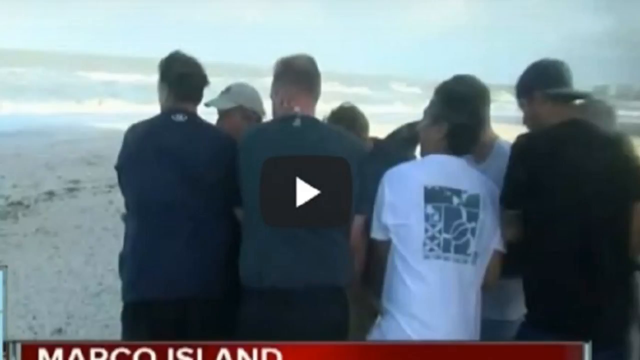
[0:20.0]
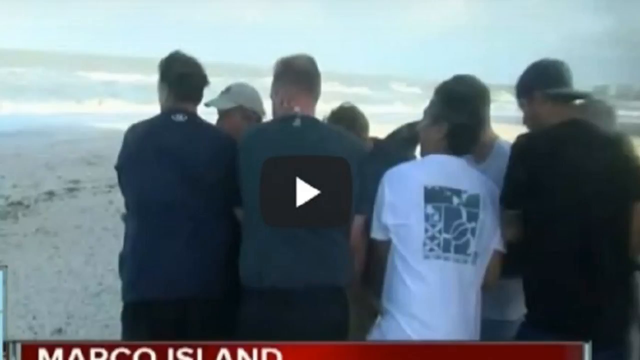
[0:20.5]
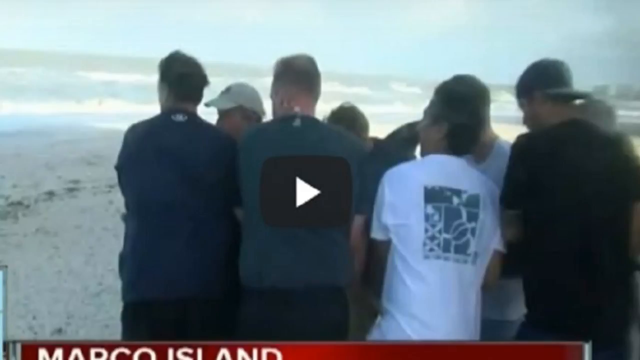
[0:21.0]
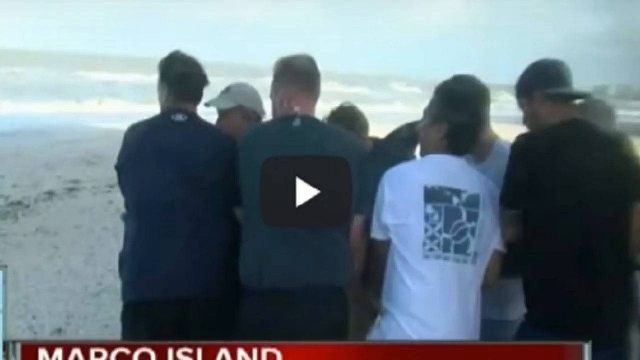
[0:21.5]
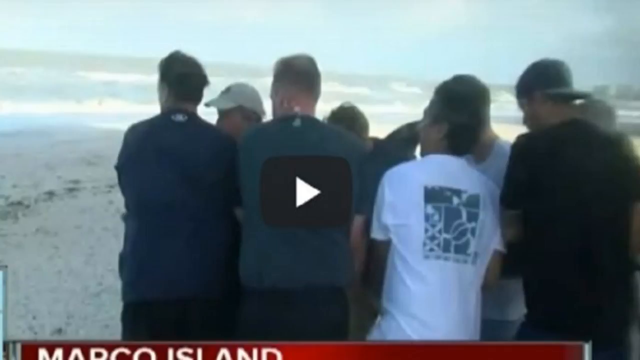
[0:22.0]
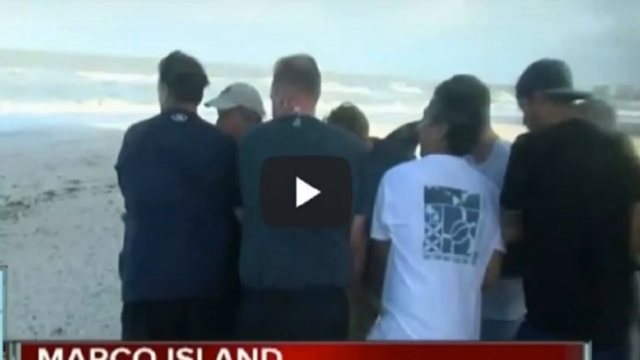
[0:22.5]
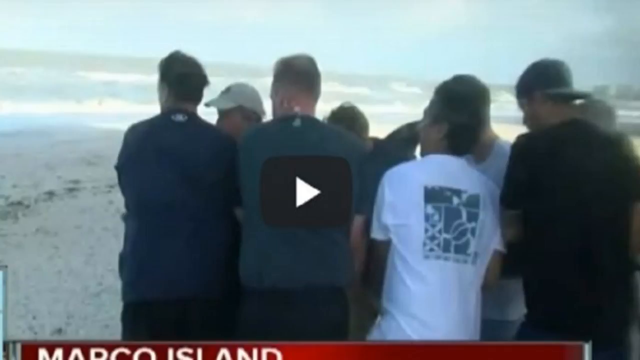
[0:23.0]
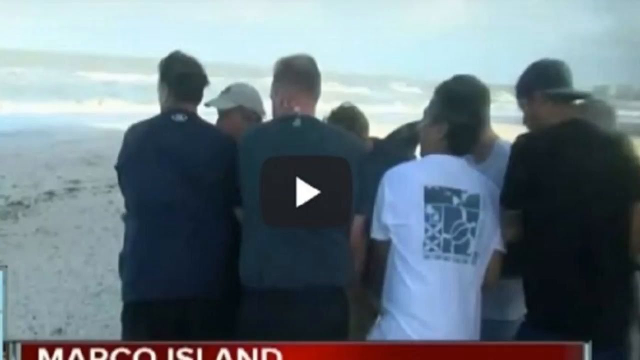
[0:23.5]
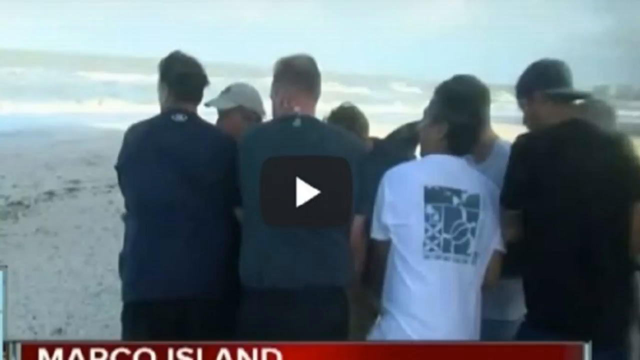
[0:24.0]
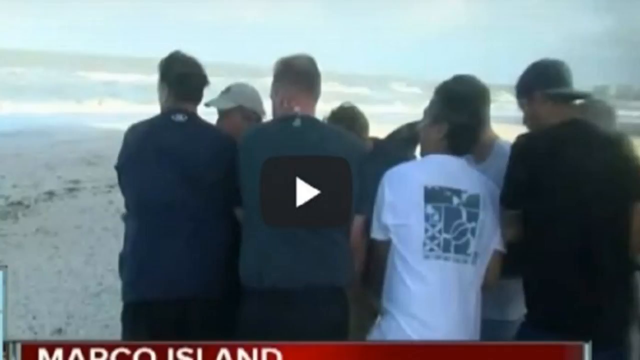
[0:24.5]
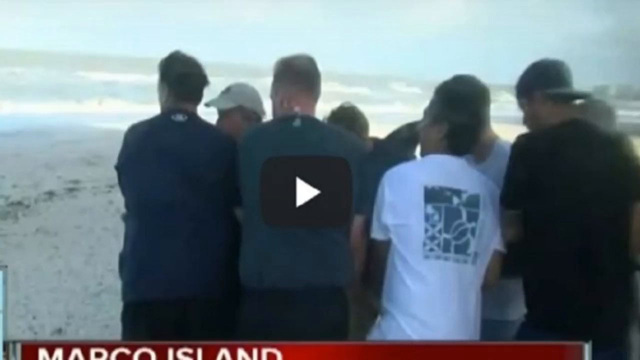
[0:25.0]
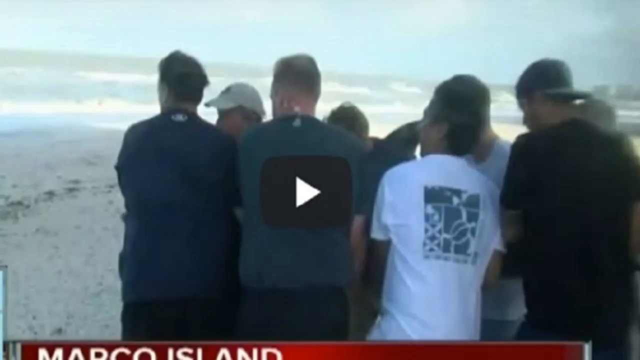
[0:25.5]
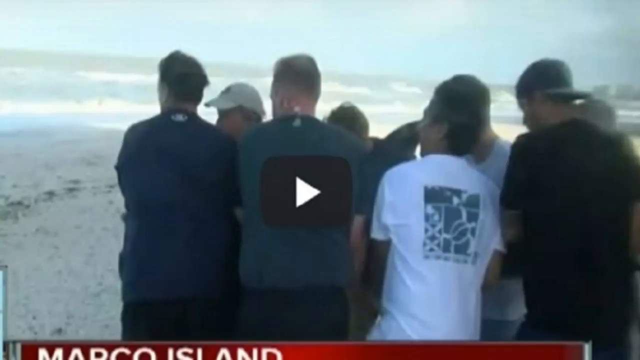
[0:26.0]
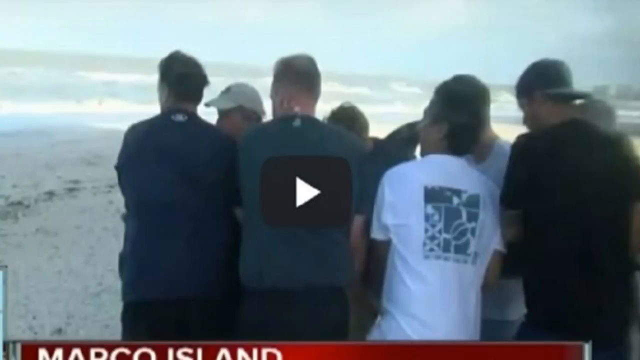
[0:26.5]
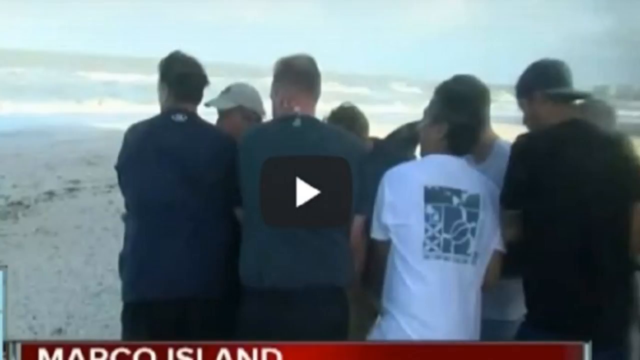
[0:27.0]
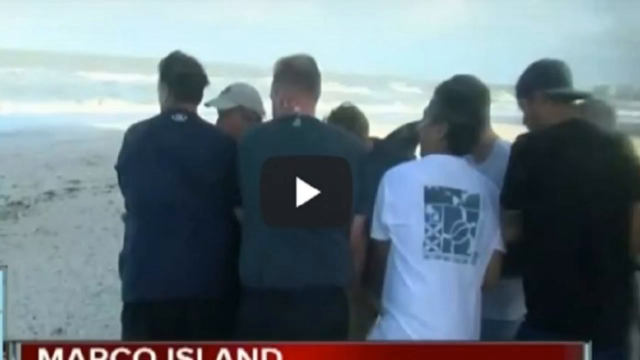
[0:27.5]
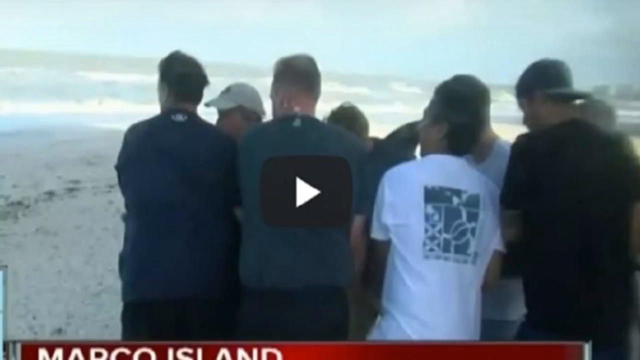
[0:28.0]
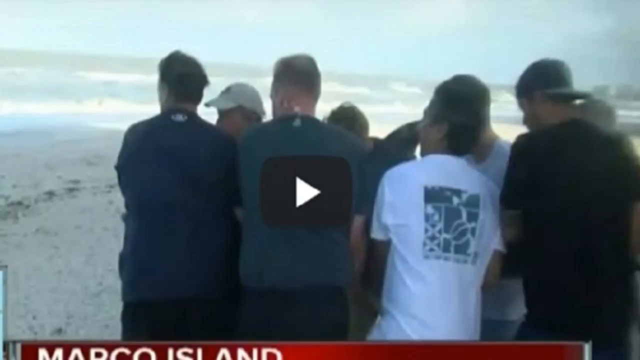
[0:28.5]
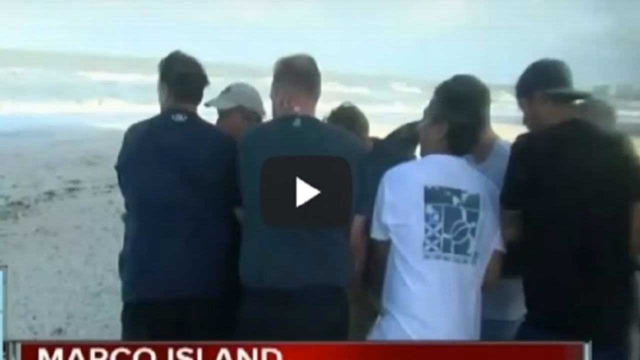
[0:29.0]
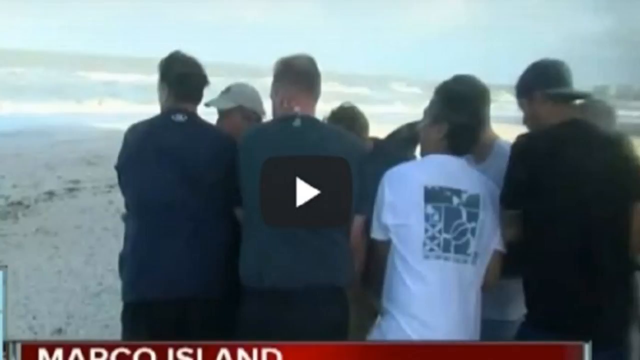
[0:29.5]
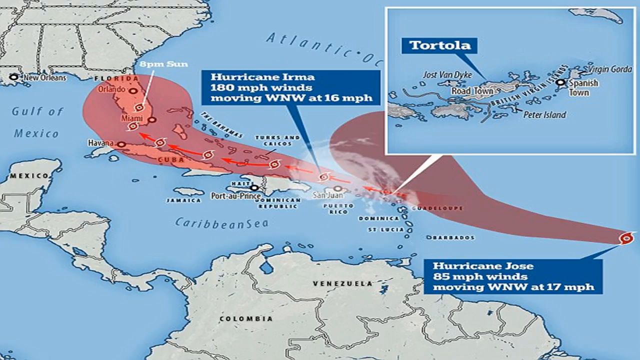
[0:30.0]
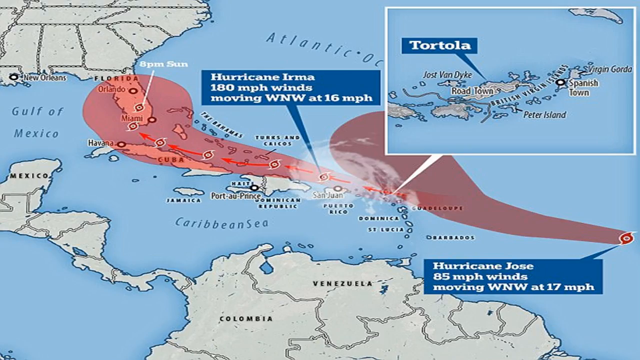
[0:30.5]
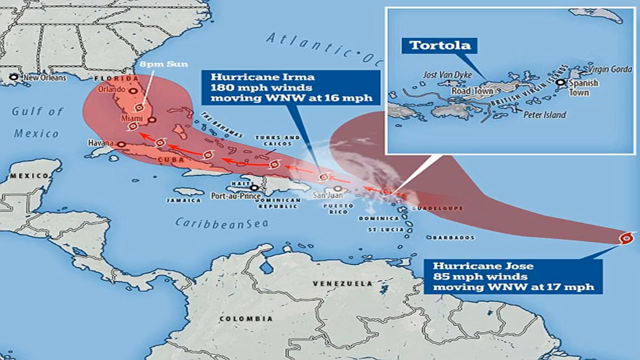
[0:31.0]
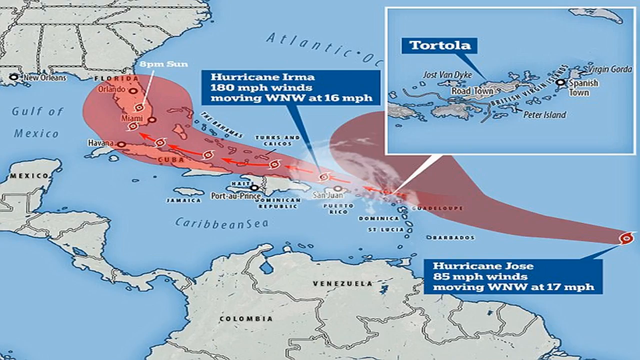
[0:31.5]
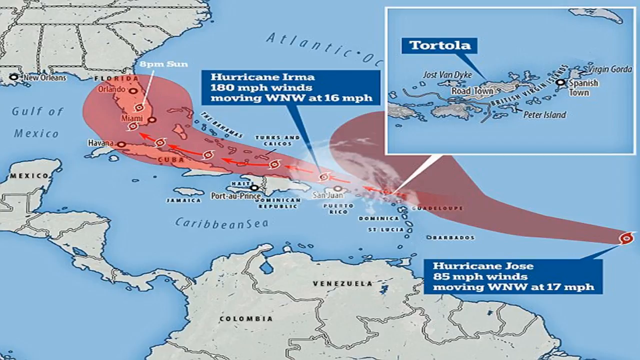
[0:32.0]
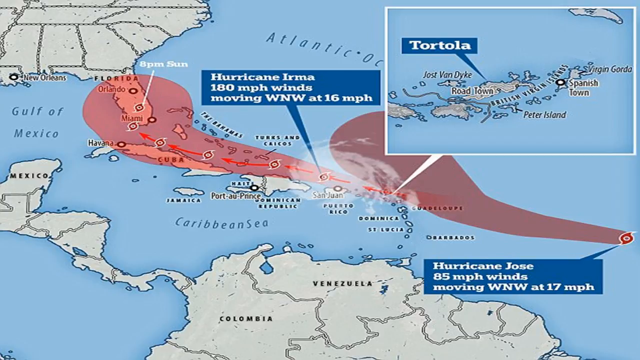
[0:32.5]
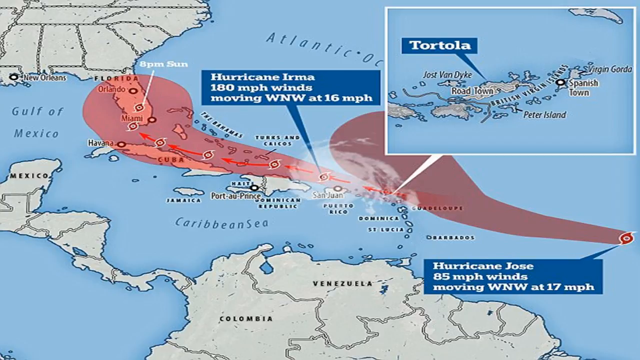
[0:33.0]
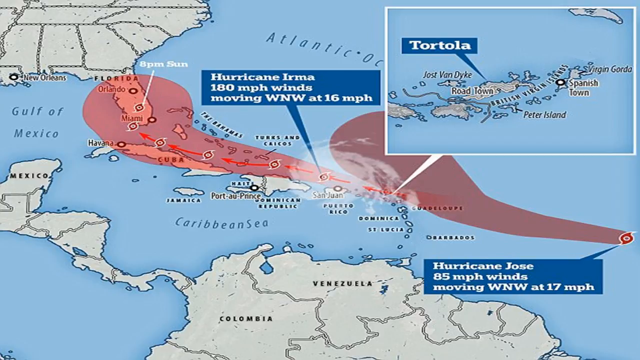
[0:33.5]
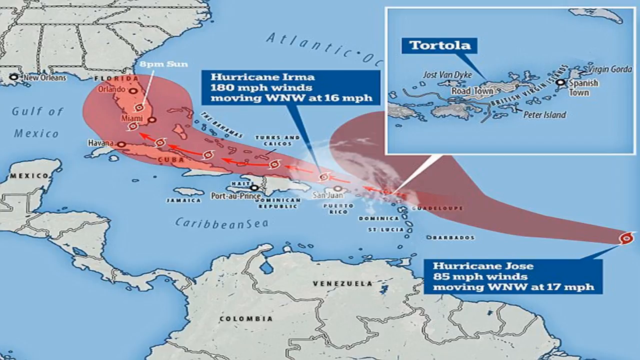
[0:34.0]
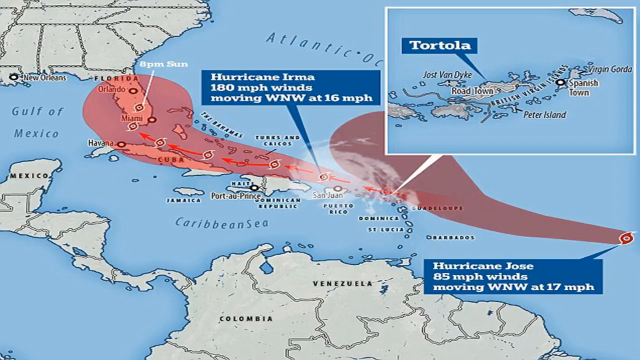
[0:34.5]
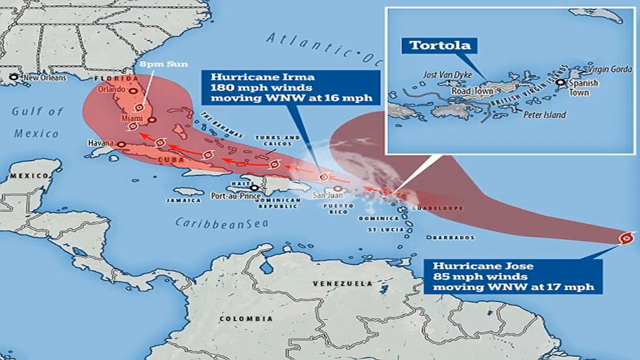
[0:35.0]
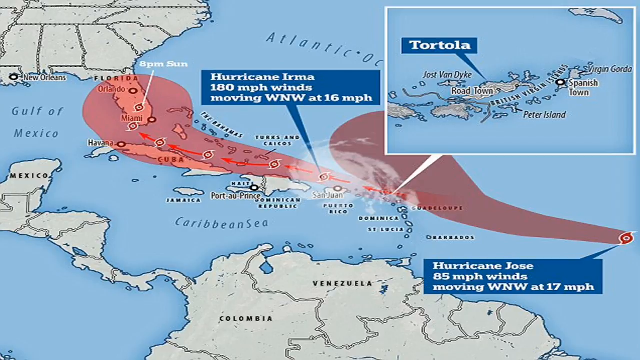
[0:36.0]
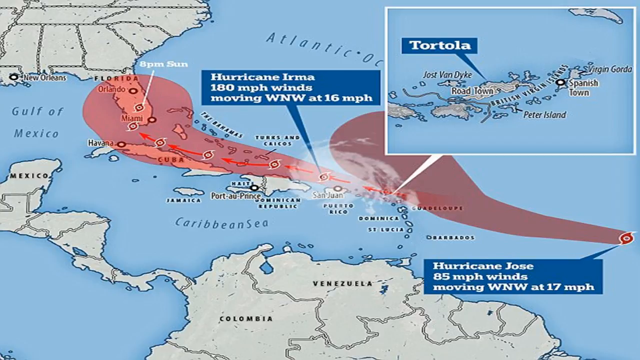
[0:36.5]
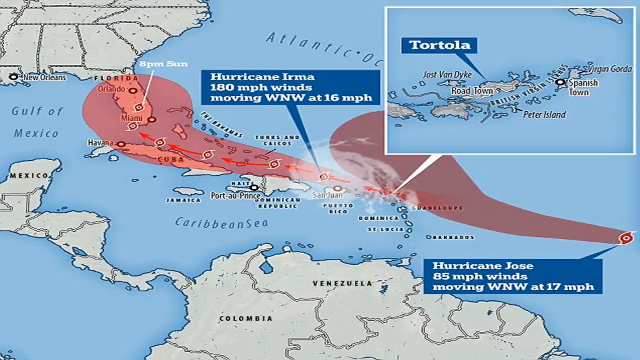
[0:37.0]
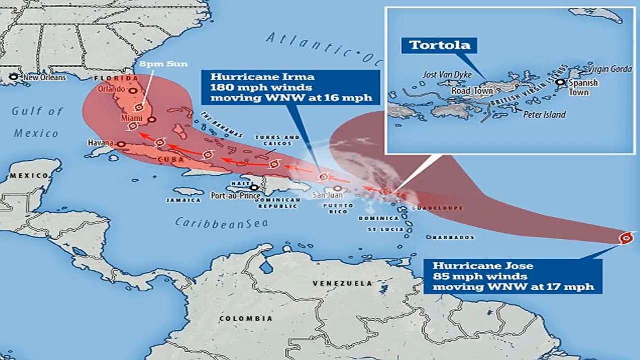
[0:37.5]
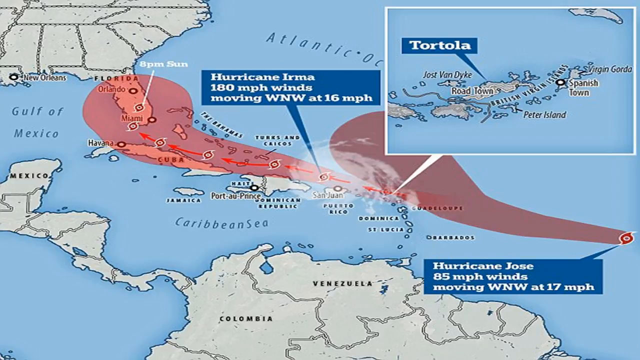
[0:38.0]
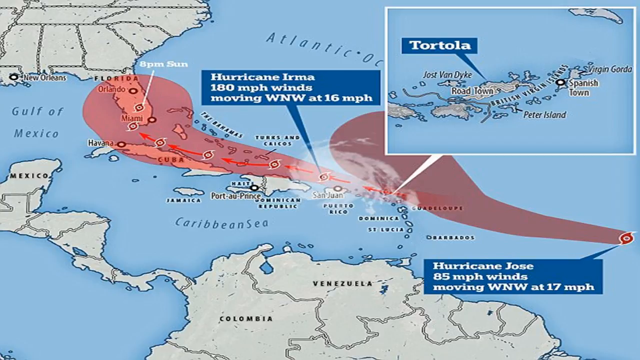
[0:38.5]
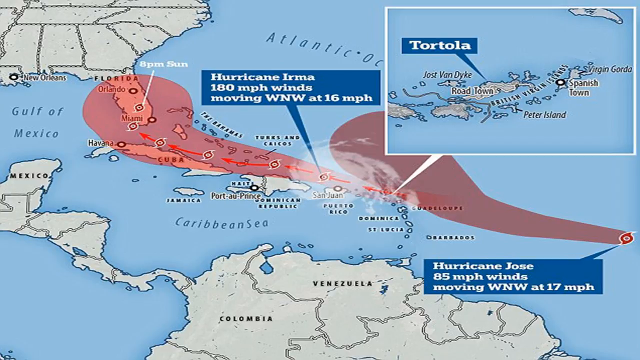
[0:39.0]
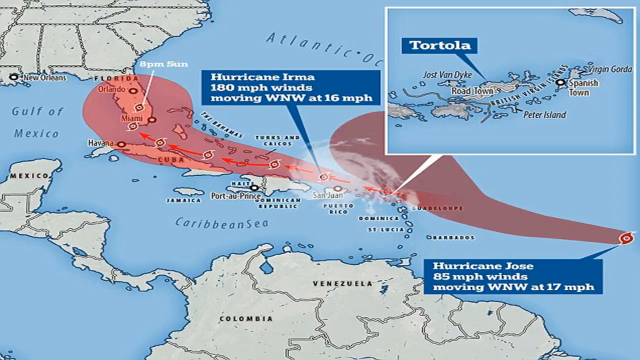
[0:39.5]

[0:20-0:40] The still from the unplayed video continues, with a black play button on it, showing a group of males on a beach looking out toward the sea; "Marco Island" can just about be made out at the bottom. The video then transitions to what looks like a map of lower North America showing Florida and the Caribbean Sea area. It mainly seems to show Hurricane Irma, with its trajectory drawn in red over the islands and up into Florida. Captions read "Hurricane Irma, 180 mile per hour winds moving at WNW at 16 miles per hour." A side window in the corner shows the island of Portola. Another caption reads "Hurricane Jose, 85 mile per hour winds moving WNW at 17 miles per hour."